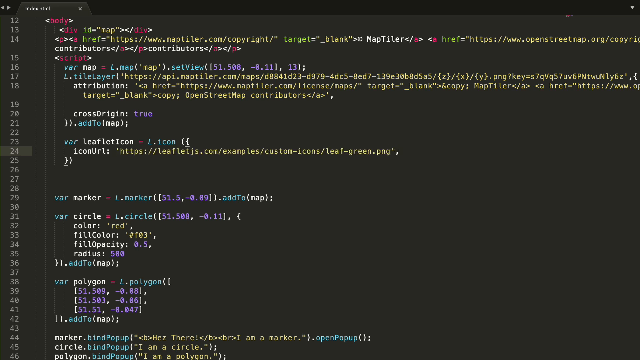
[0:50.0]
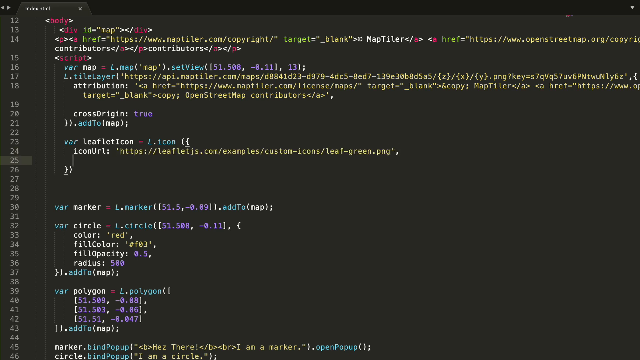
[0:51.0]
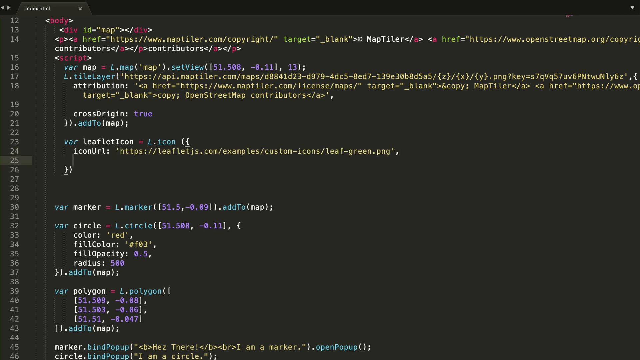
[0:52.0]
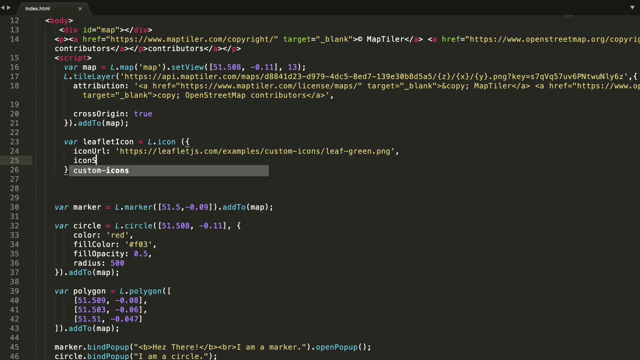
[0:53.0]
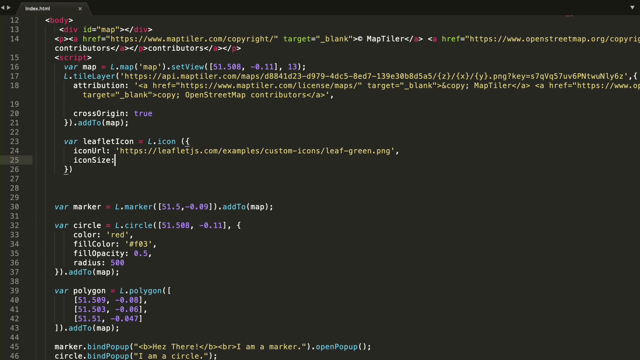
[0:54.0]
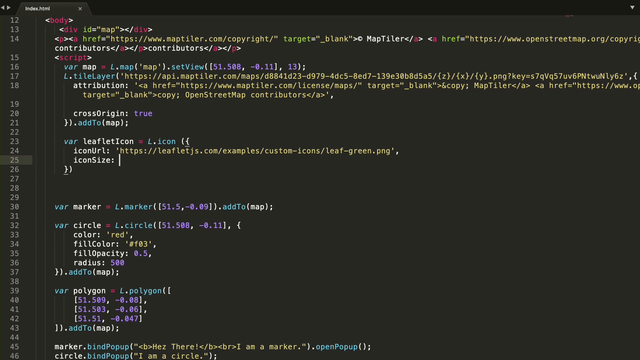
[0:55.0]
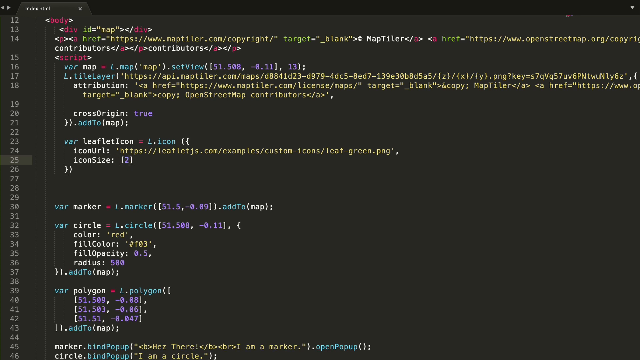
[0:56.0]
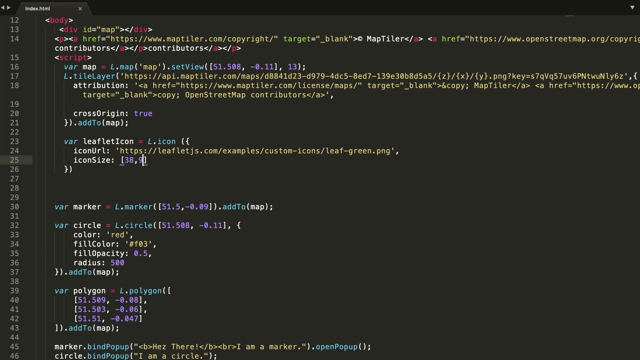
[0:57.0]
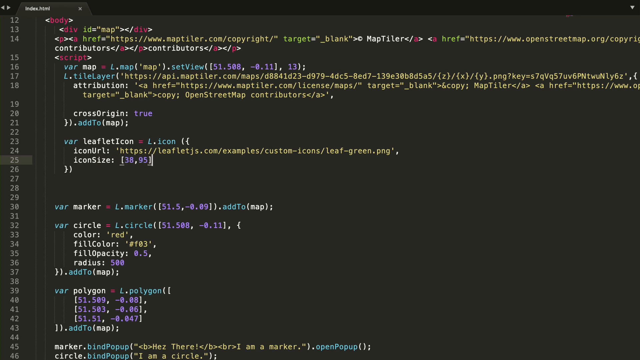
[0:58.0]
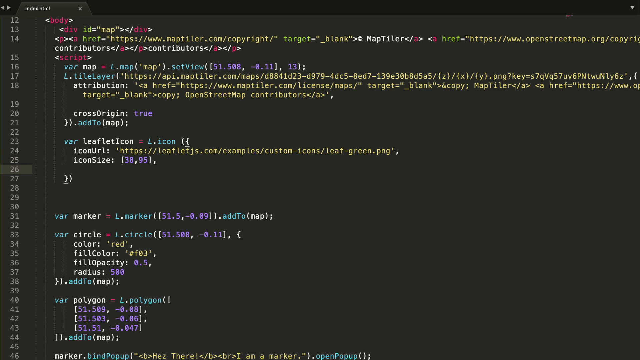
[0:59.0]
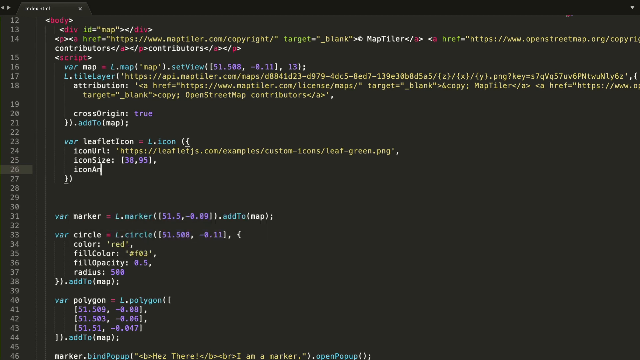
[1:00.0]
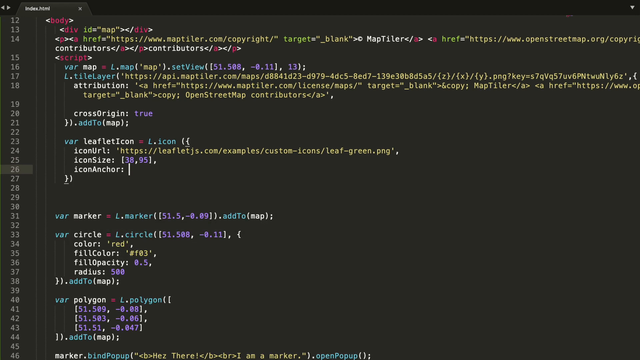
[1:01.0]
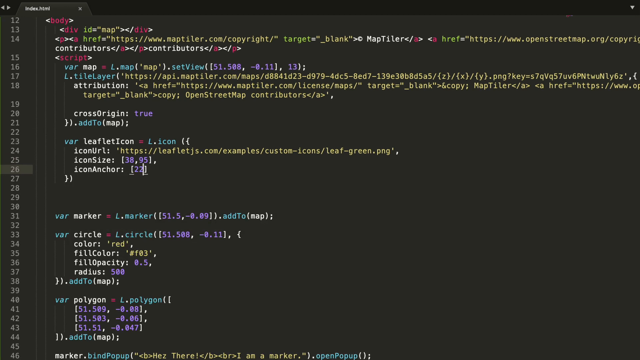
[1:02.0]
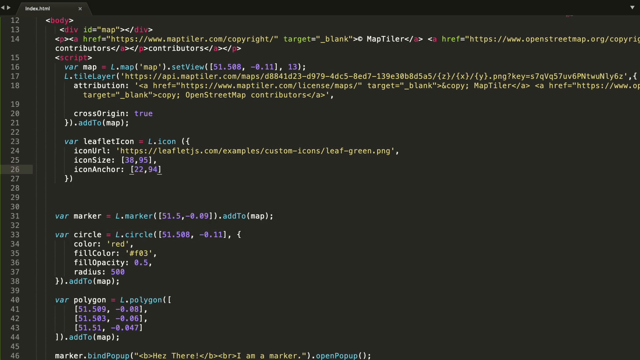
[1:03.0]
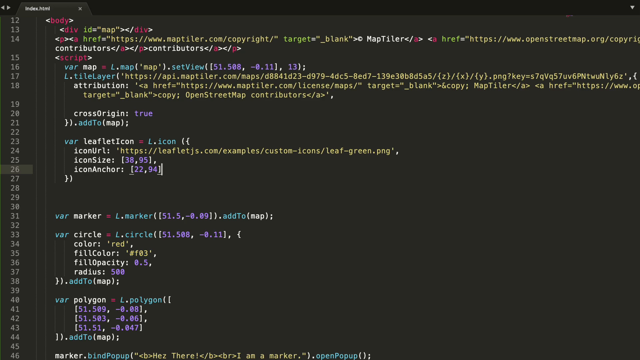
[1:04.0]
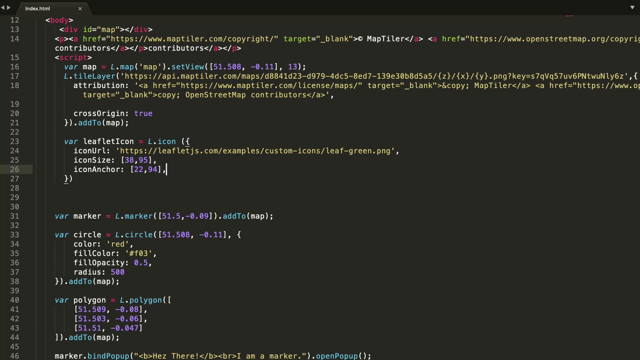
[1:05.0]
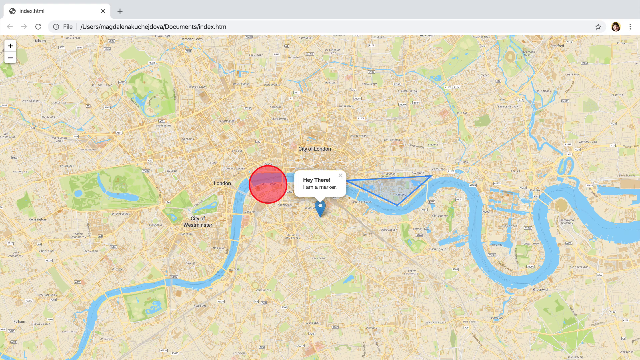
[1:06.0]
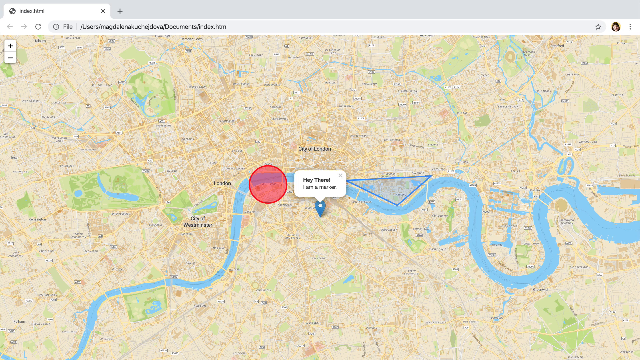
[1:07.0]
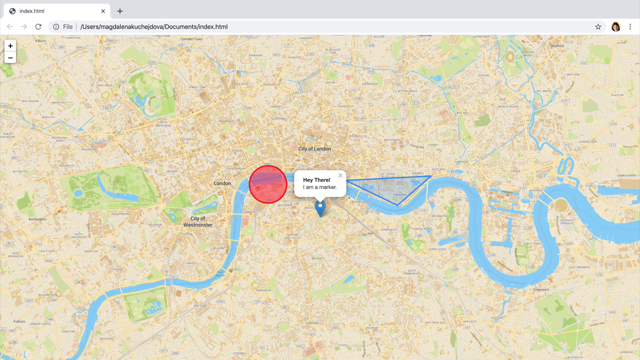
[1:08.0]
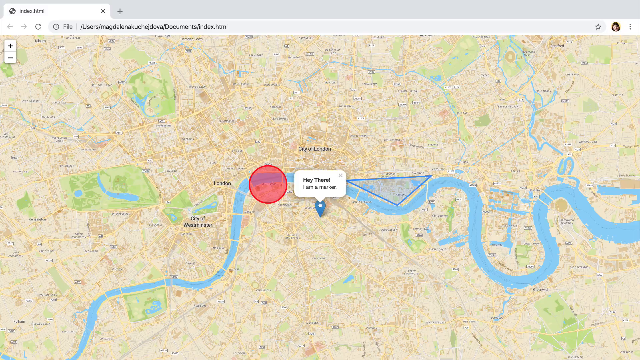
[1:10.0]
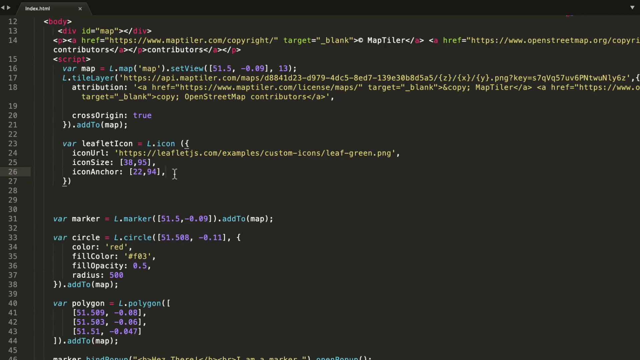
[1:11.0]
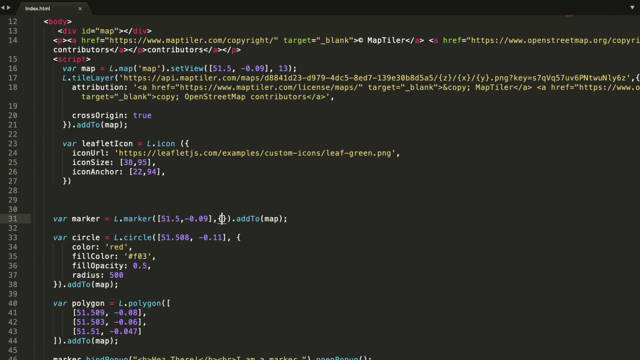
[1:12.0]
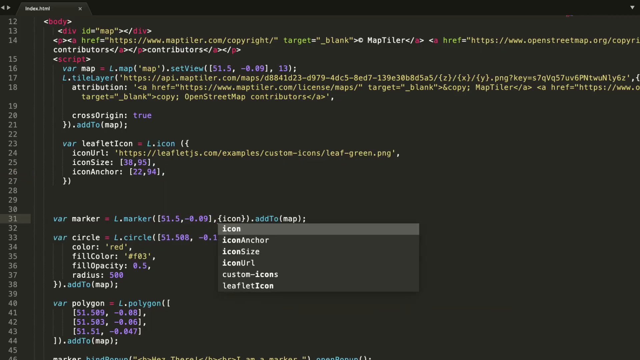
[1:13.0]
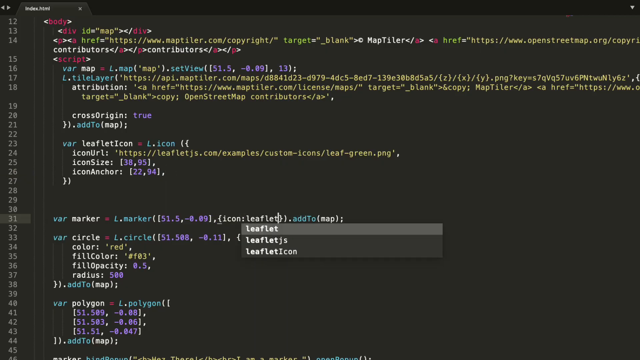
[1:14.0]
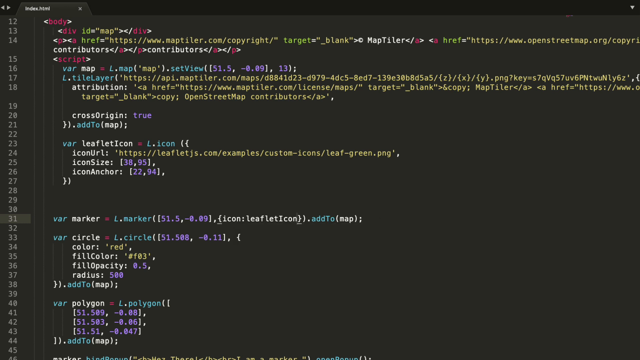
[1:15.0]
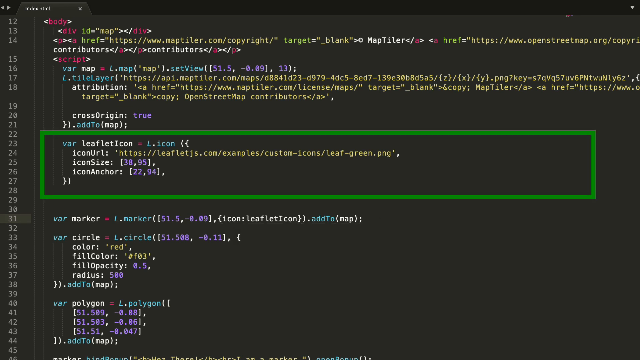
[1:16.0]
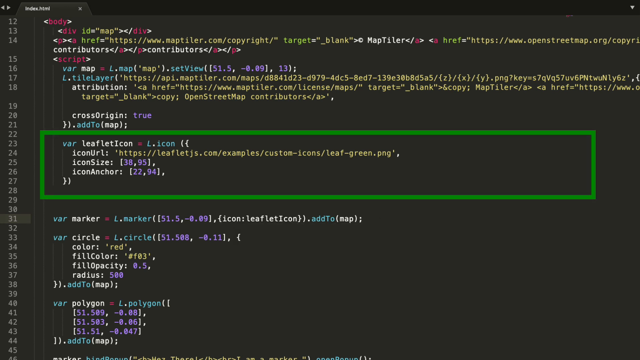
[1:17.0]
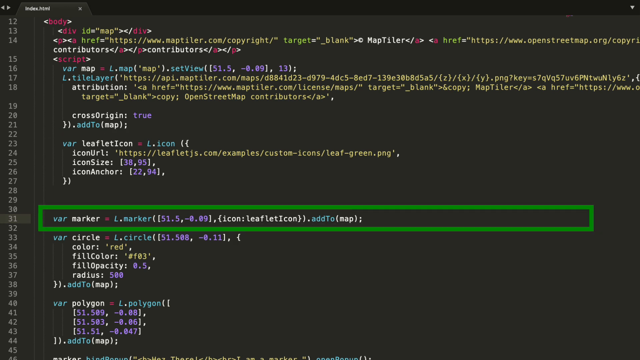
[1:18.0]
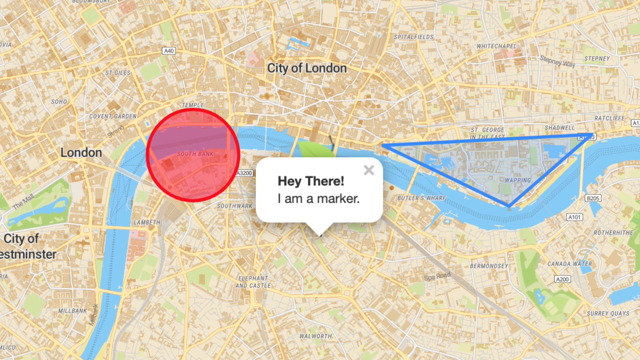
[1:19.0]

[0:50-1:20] The icon size of the leaflet icon is changed to 38,95, and then the icon anchor is specified as 22,94, followed by a comma. The view goes back to the website page, apparently to see what it looks like. Then, at the variable marker, the code is changed to include the icon leaflet icon. The variable leaflet icon appears to be highlighted with a green box, and the variable marker, where the icon leaflet icon was added, is surrounded by a red box. The map is viewed in between or afterward.